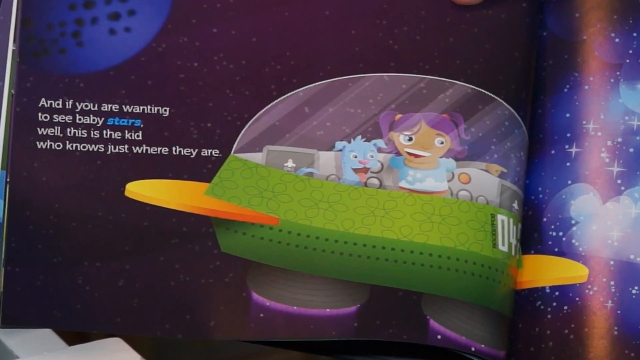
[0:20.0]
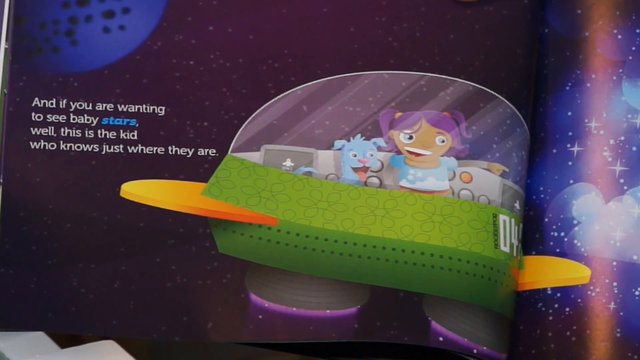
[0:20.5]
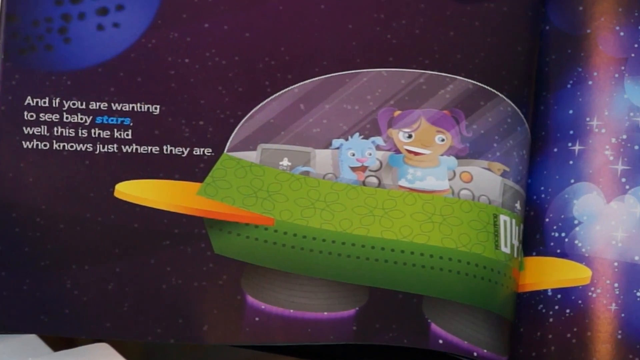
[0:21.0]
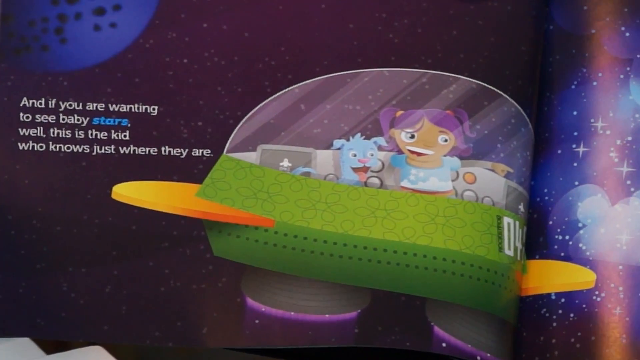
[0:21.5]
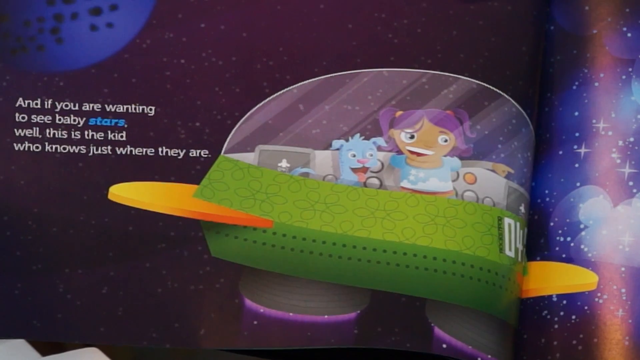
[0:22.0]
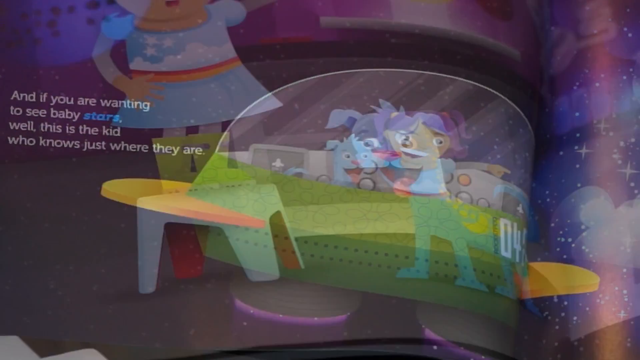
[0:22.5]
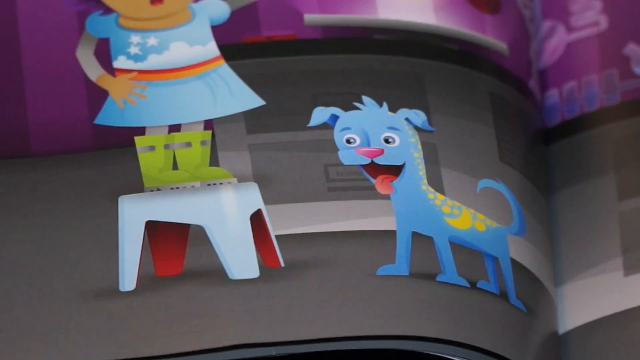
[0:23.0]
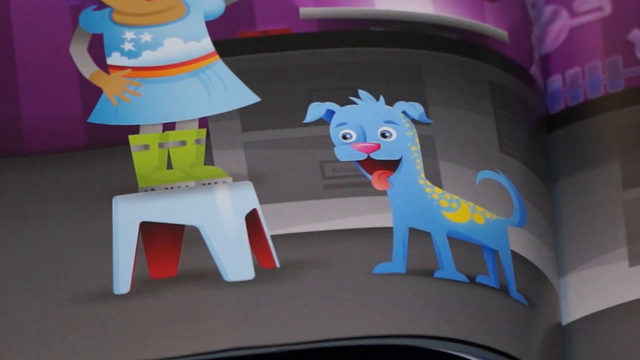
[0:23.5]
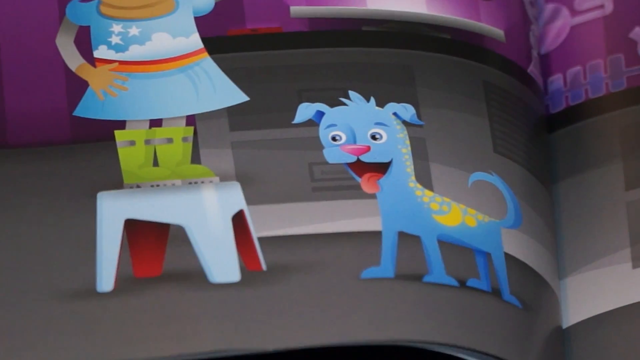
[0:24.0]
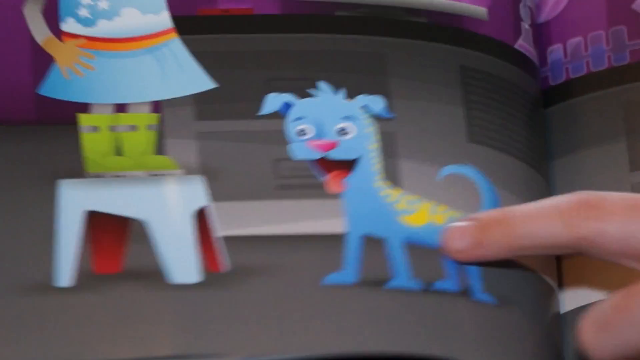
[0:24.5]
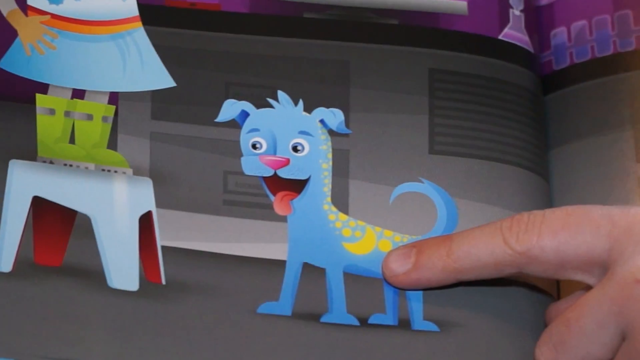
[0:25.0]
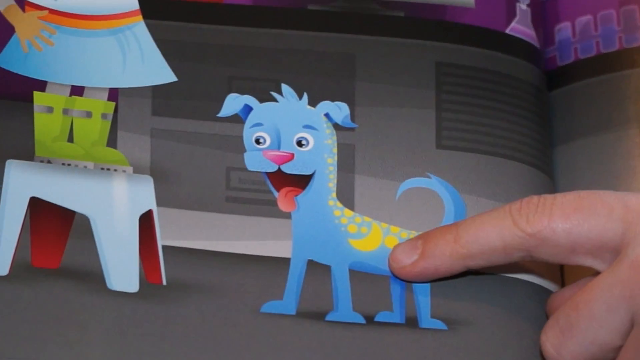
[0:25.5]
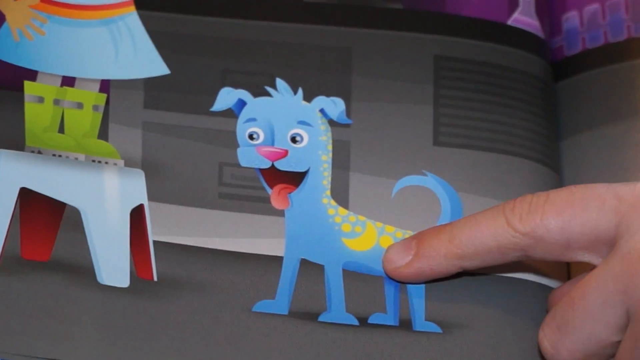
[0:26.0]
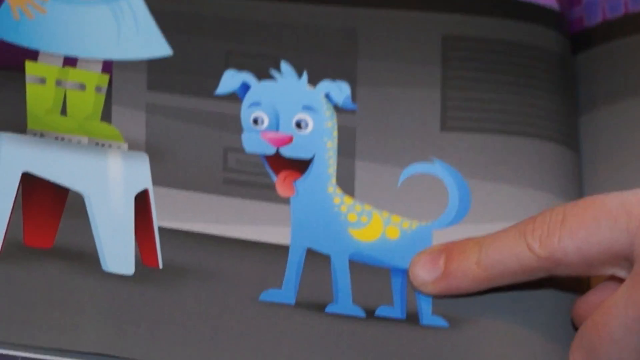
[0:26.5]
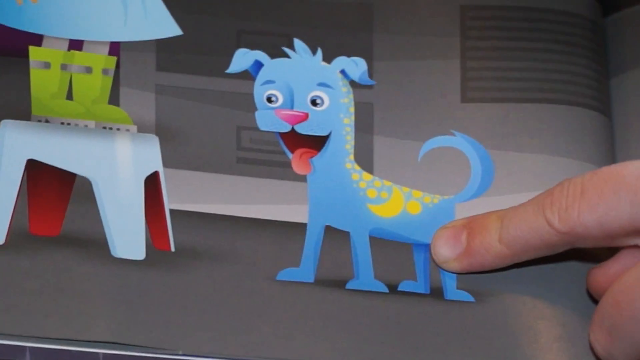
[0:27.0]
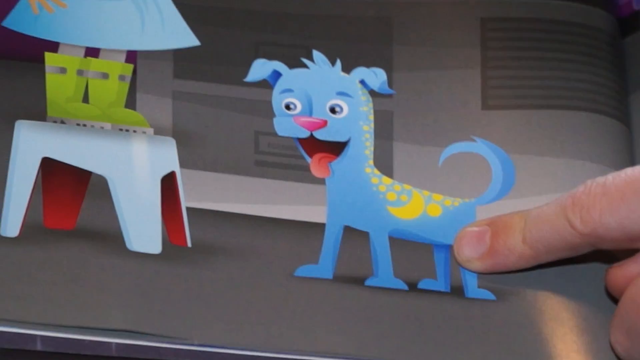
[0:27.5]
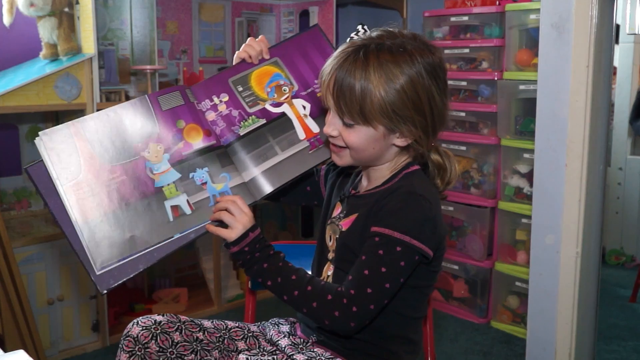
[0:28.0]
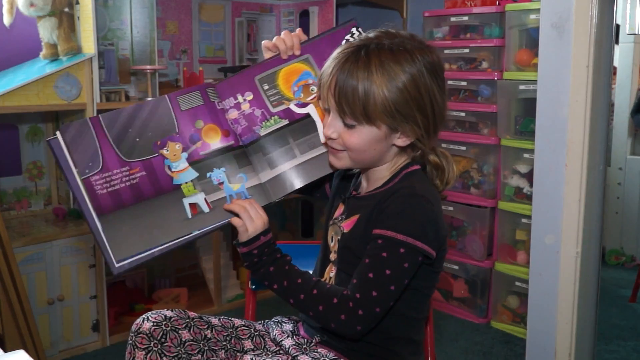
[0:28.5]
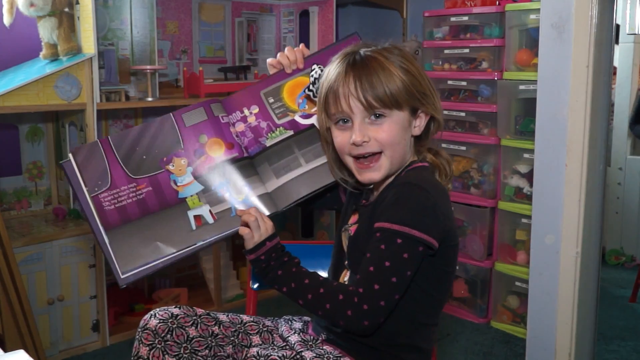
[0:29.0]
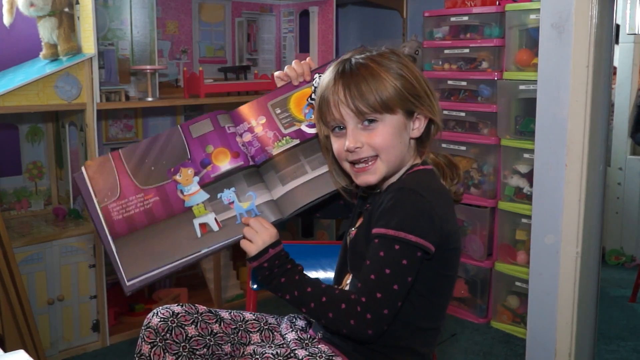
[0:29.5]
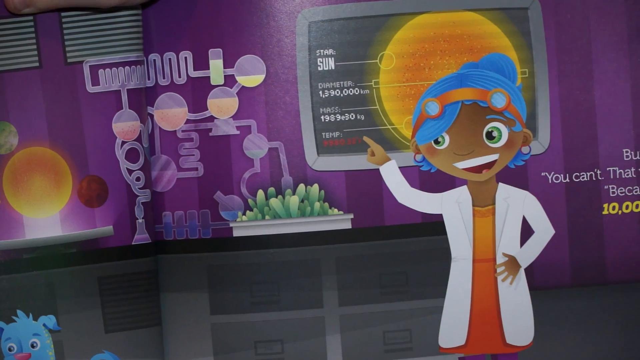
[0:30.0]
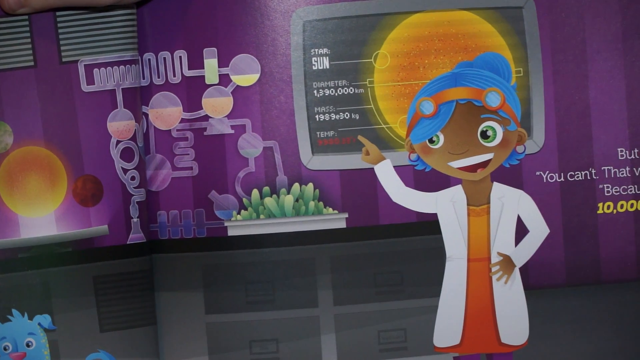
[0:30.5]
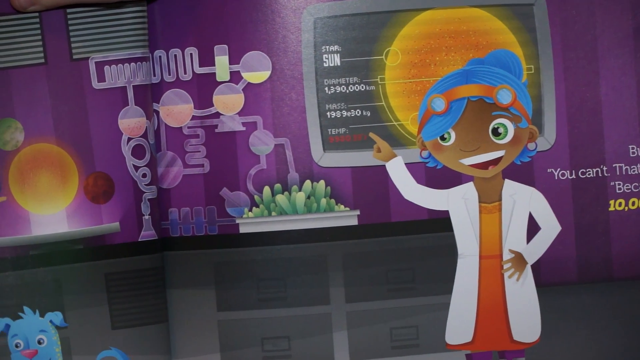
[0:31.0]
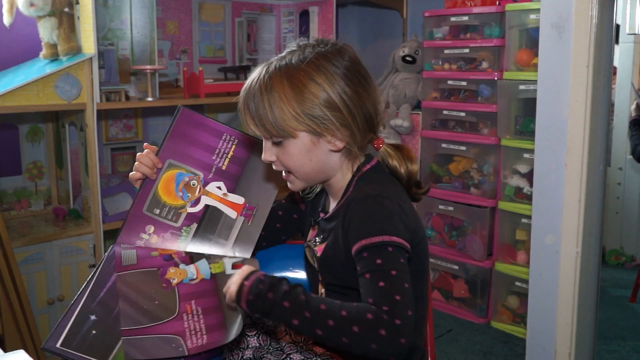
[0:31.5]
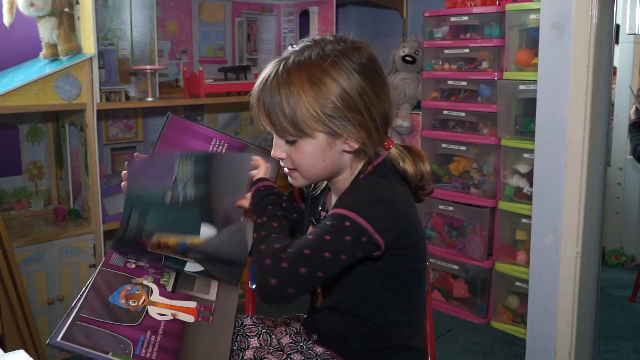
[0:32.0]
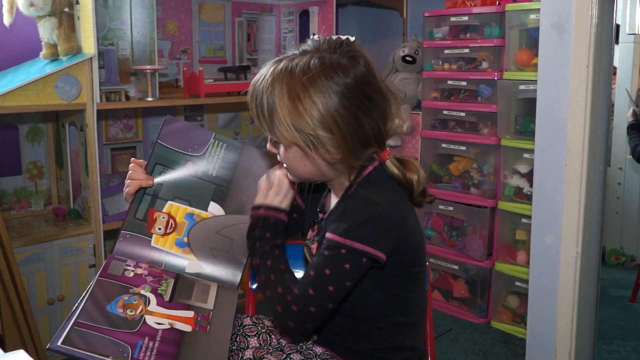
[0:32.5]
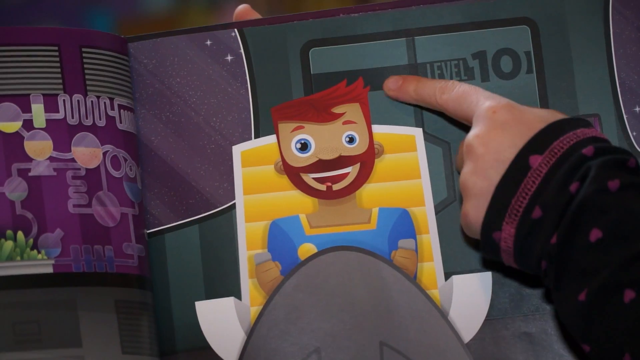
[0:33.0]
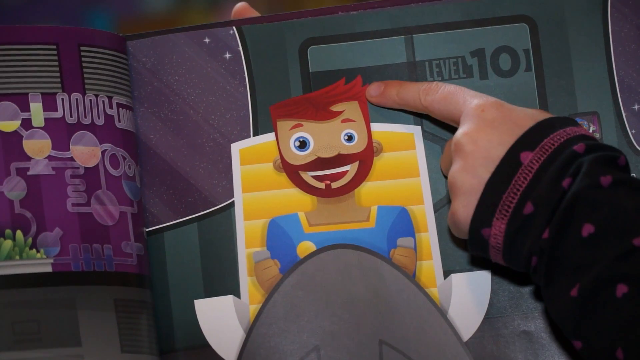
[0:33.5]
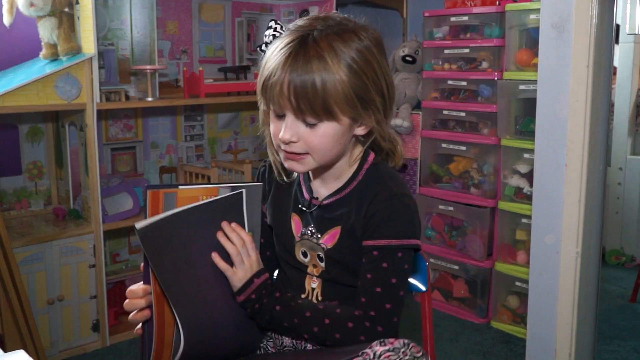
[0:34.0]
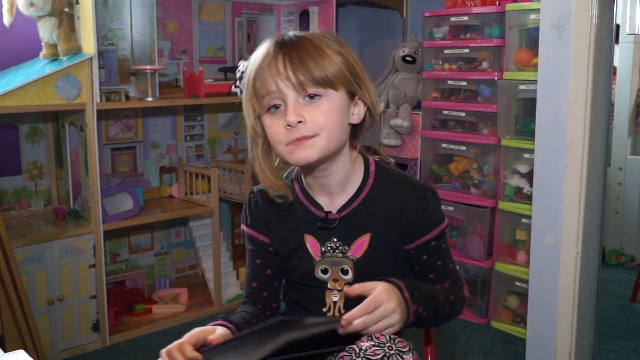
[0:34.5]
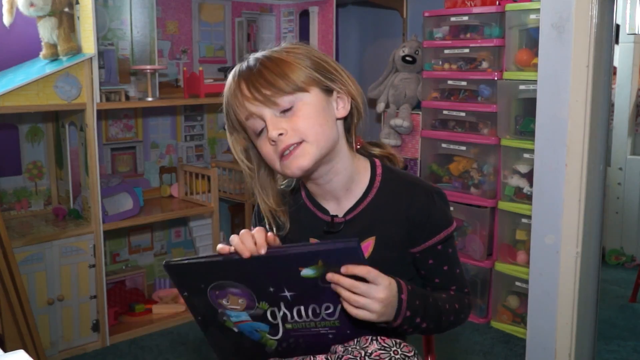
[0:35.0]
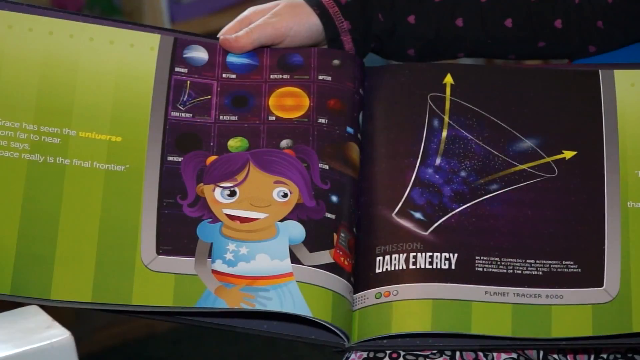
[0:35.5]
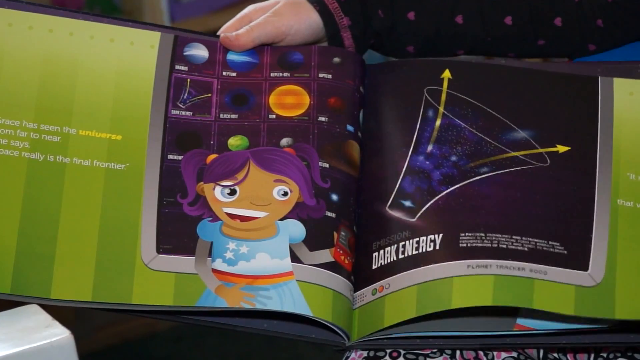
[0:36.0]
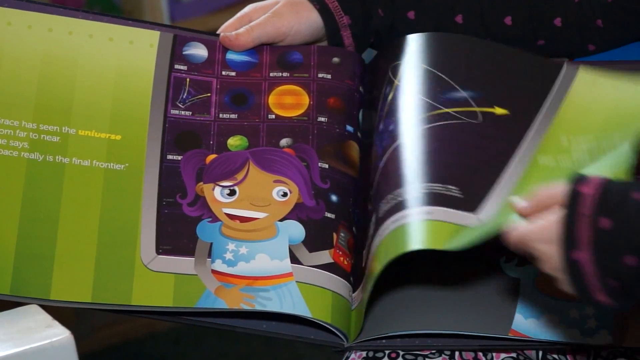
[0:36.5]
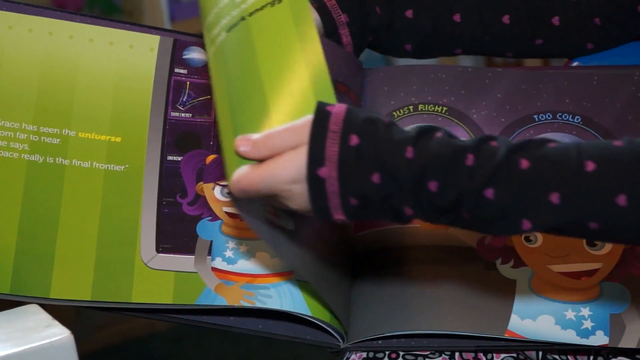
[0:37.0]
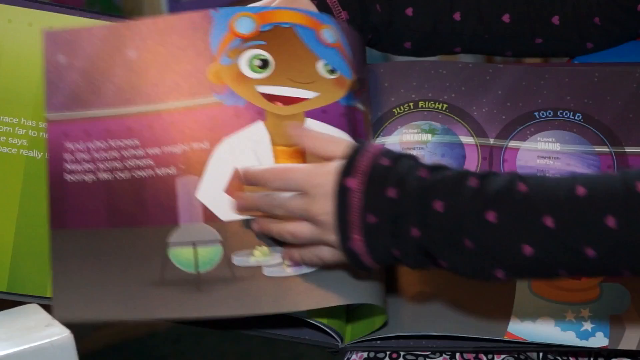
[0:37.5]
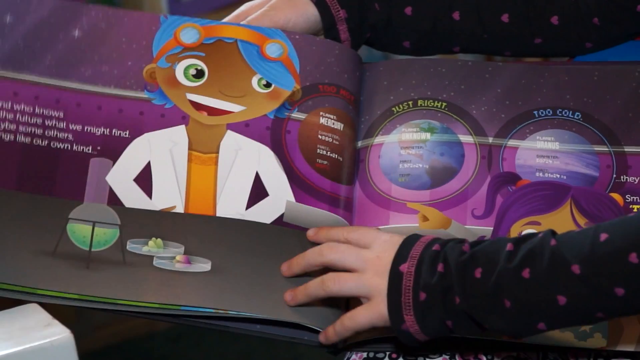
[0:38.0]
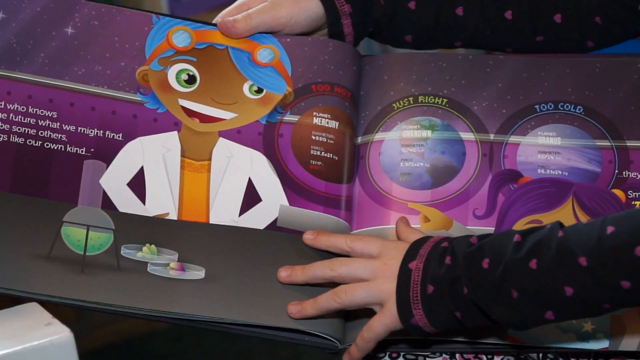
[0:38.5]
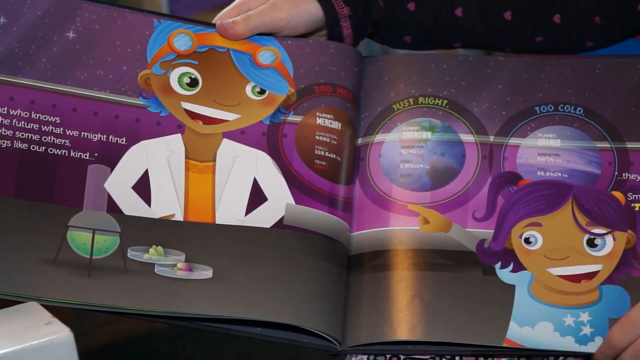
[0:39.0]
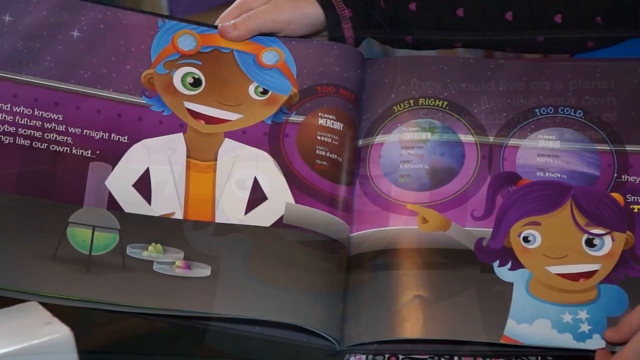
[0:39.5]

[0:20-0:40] A close-up of a page from the book Grace shows the young female astronaut with purple hair traveling in a spaceship with a blue dog, while the girl points to something. The words on the page say "if you are wanting to see baby stars Well, this is the kid who knows just where they are." The spaceship has a green flowered base, orange-yellow wings and a round glass top. A close-up shows the astronaut girl inside the spaceship, standing on a stool and pointing out. Another close-up shows the blue dog, who has yellow spots on his back and his tongue out, and the girl points to a moon on his back. She lifts the book in her arms, and a close-up of another page shows a woman with blue hair who is a scientist, wearing a white coat and pointing to an experiment with lots of glass balls, tubes and liquids. The girl turns the pages and points to a page with a man with red or reddish-brown hair sitting in a spaceship, steering; he looks to have one eye bigger than the other. The girl closes the book, and the image cuts to another page about dark energy. She turns the page and the female scientist with blue hair is shown talking to the purple-haired young girl.